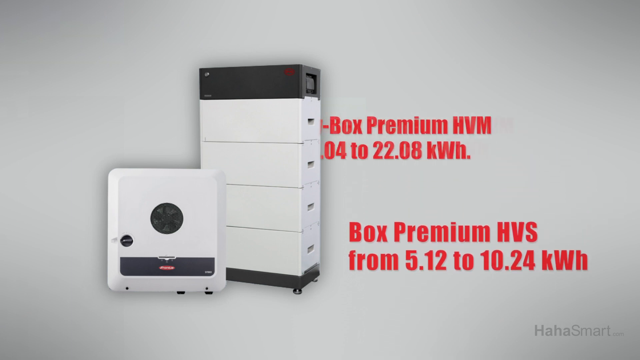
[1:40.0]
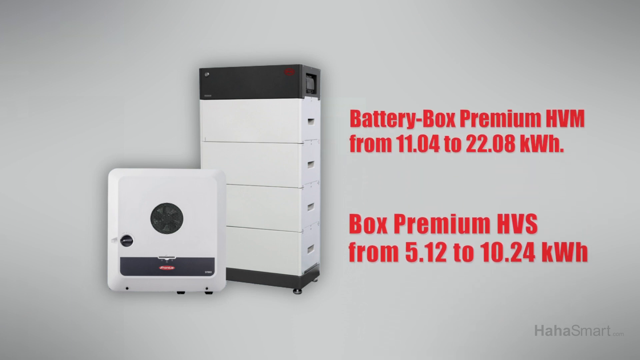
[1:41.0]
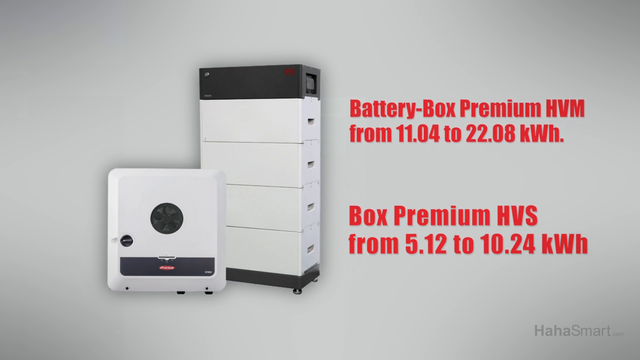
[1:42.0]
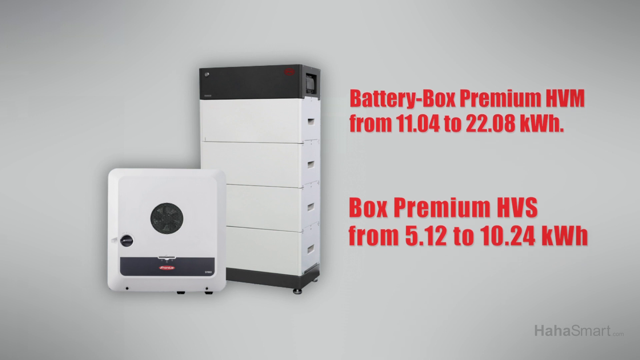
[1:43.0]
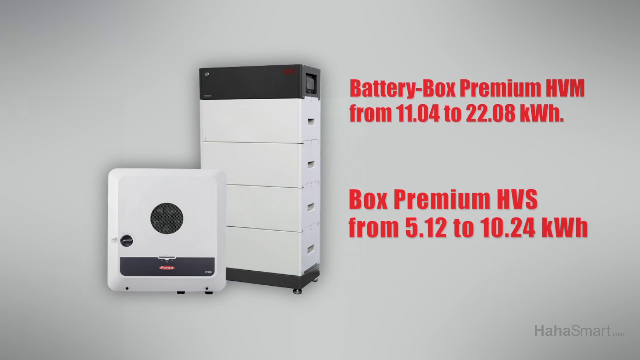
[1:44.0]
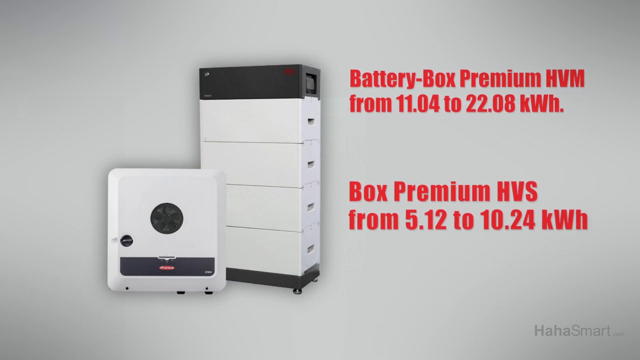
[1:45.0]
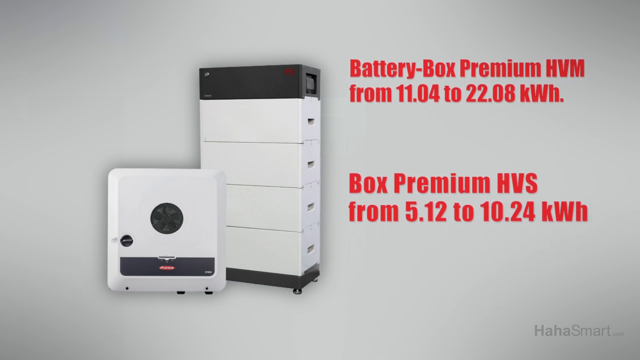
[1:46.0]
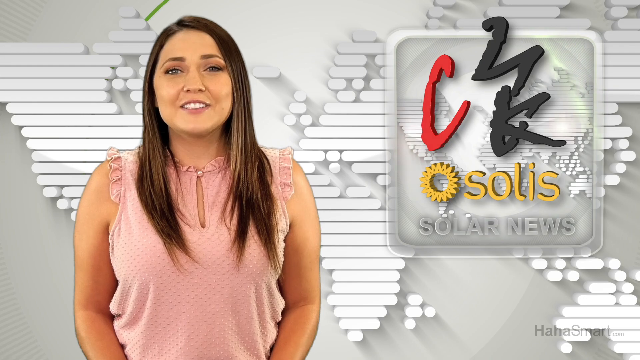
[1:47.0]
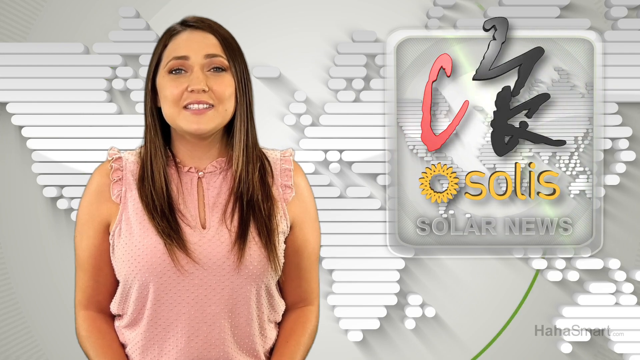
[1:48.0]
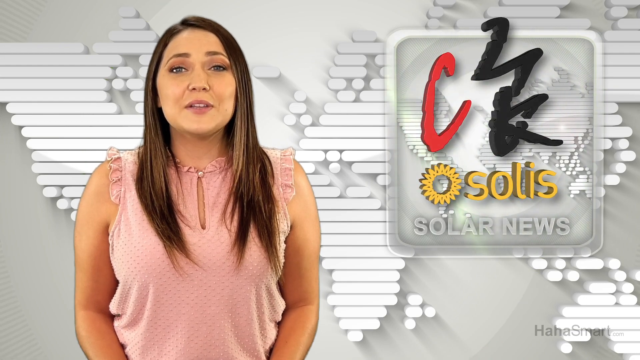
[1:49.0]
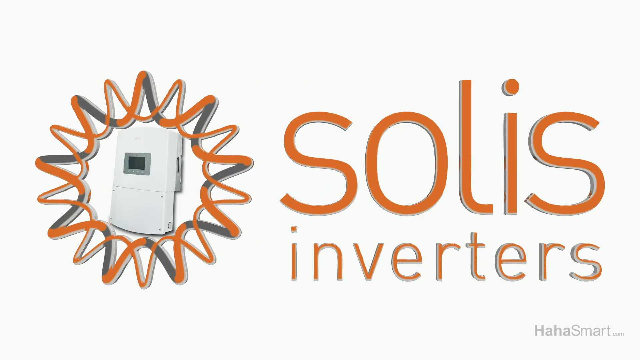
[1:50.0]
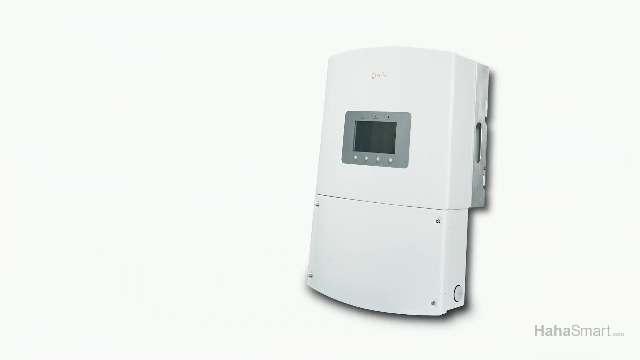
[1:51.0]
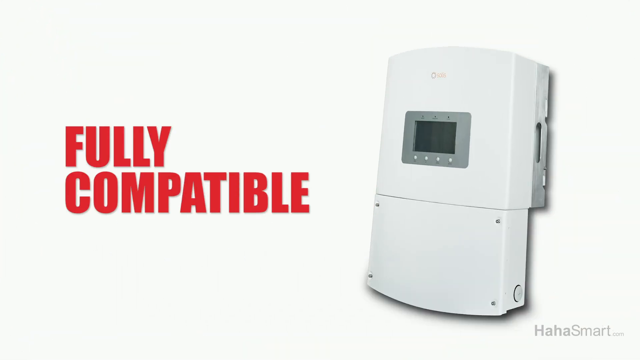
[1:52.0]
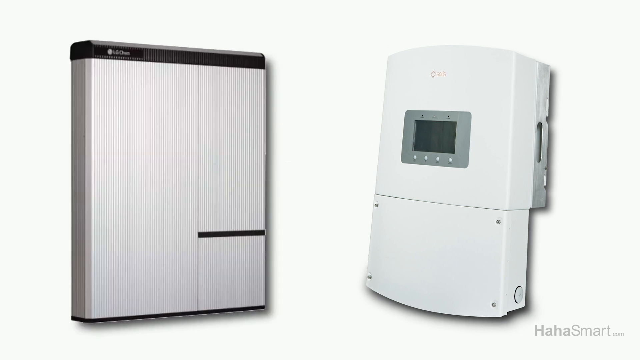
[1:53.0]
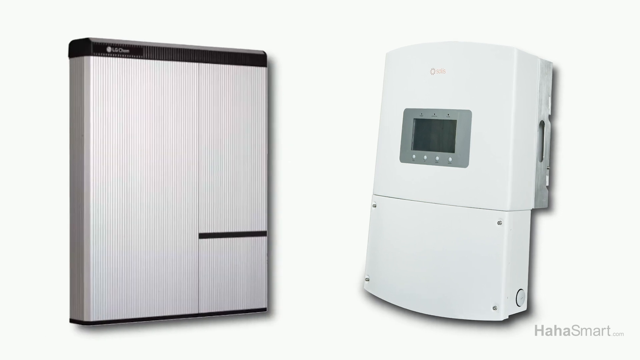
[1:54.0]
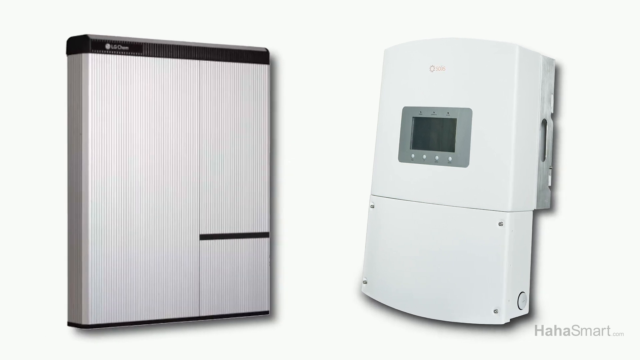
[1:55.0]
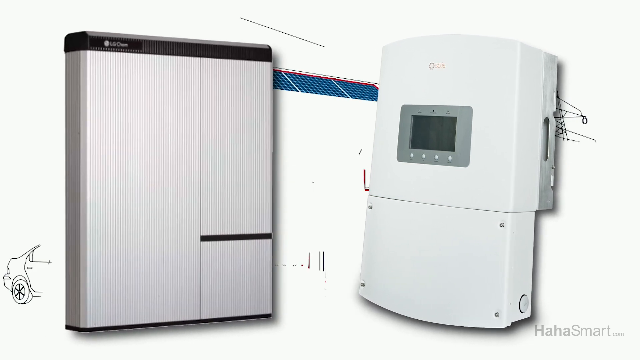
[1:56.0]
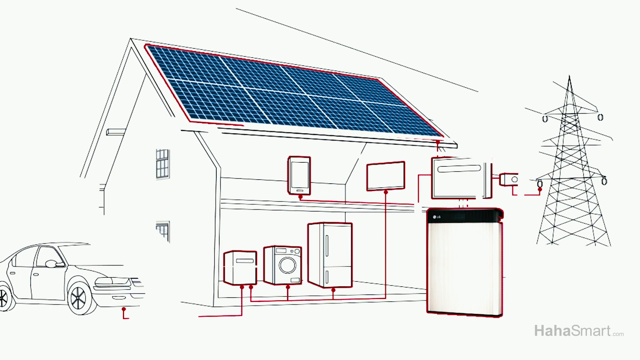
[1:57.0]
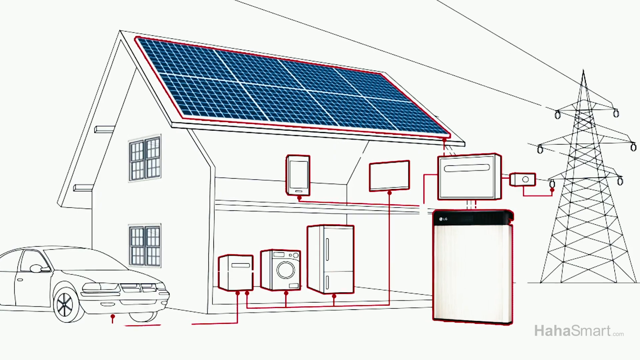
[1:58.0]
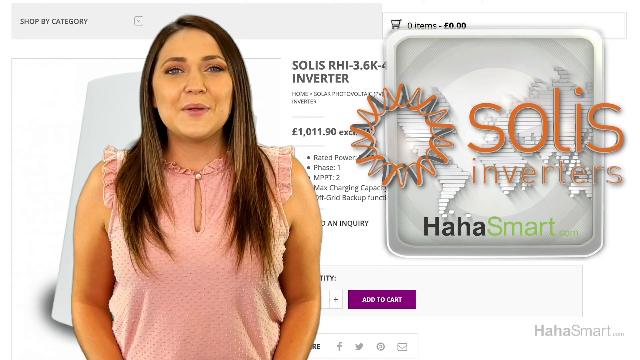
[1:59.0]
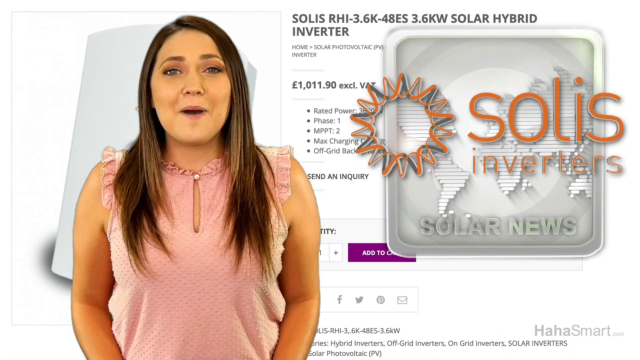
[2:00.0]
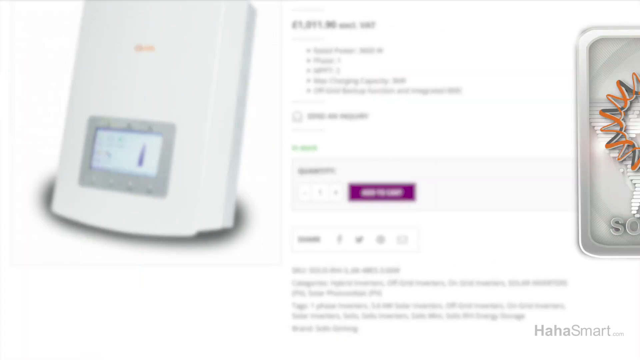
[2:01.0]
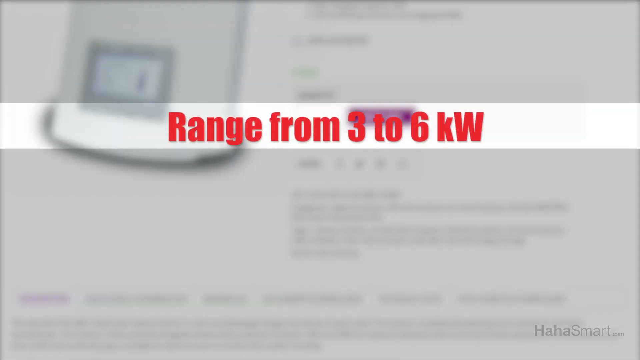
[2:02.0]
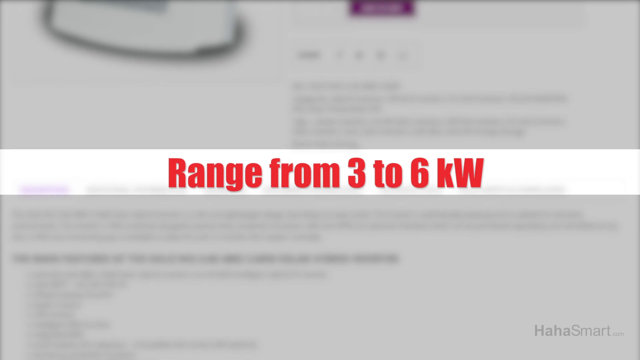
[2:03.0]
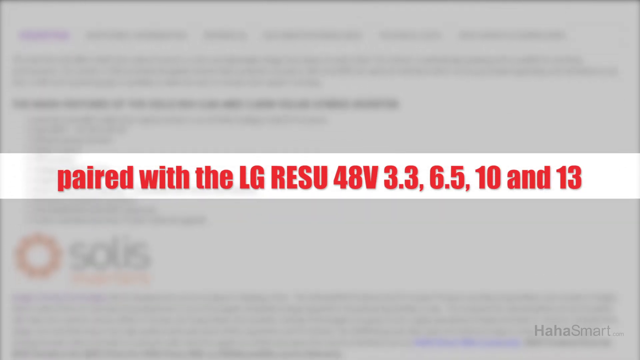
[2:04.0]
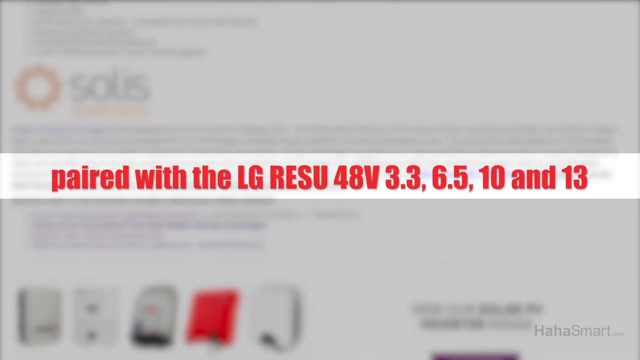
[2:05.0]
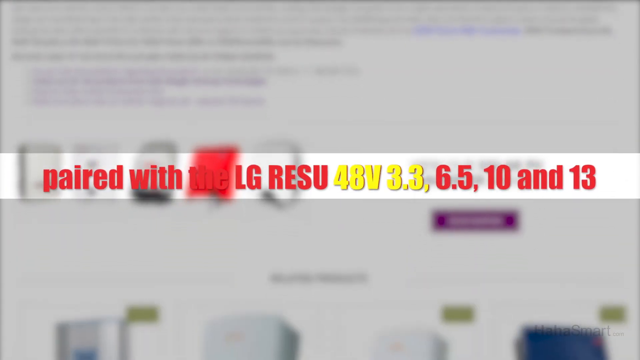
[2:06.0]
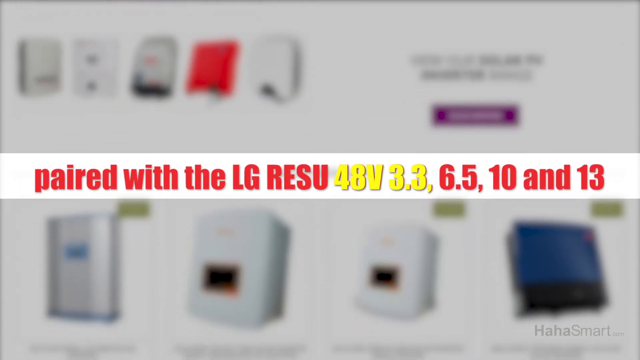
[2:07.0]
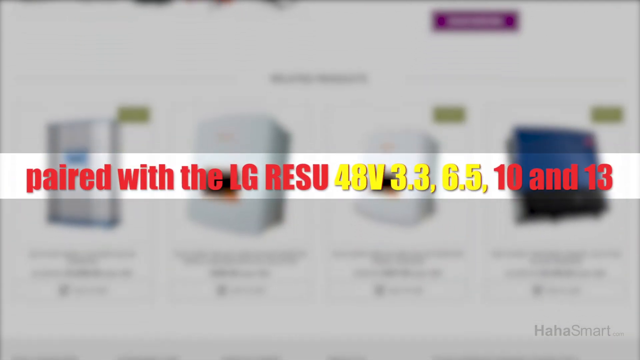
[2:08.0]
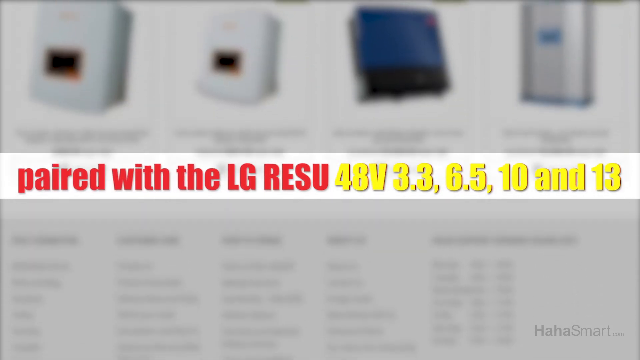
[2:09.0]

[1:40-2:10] The large rectangular battery box is shown along with the inverter panel with the black circular fan in the middle. Text reads "battery-box premium HVM from 11.04 to 22.08 kwh", and below it "box premium HVS from 5.12 to 10.24 kWh". The text is all in red and slowly scrolls up toward the top of the screen. The video returns to Jessica in the newsroom, where another clear rectangular box shows a red C with what appears to be black Chinese marks next to it, and below that an image of a yellow sun with "Solis" in yellow. On a new screen, an orange logo reading "Solis Inverters" with a sun next to it comes into view from left to right and quickly scrolls from left to right. Inside the sun something pops outward, and a new screen appears with an inverter box moving from left to right. The words "fully compatible" come up on the left side of the screen and are taken over by what looks like a silver-colored cabinet. Then an image of a house with solar panels on the roof appears. Back with Jessica, the background shows scrolling down on what appears to be a computer screen, taking up the entire green-screen background she reports from; the background kind of fades or blurs out. Across the screen, a white text box holds red text reading "paired with the LG RESU 48V 3.3, 6.5, 10 and 13".